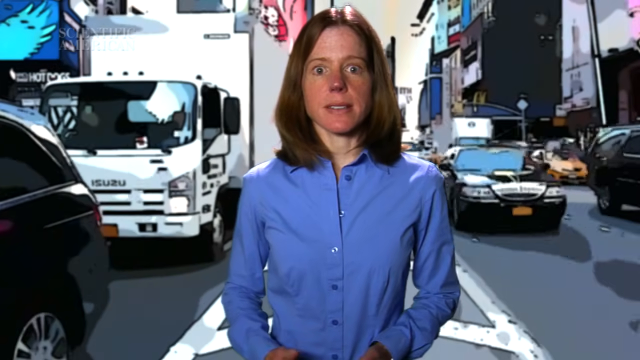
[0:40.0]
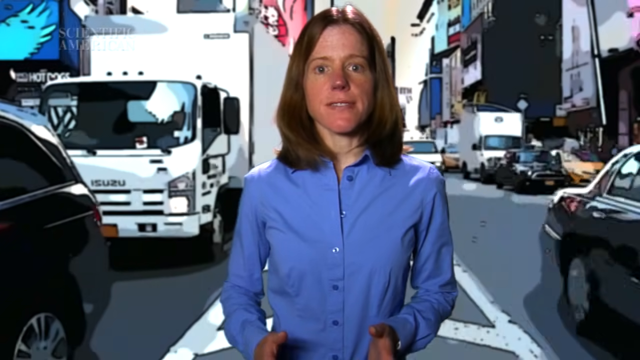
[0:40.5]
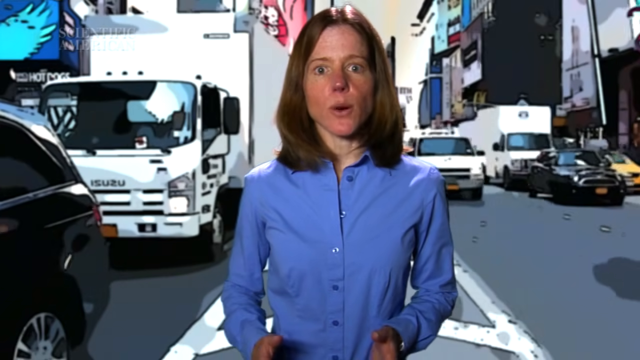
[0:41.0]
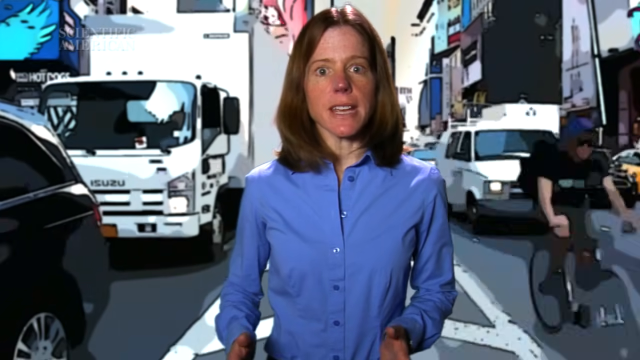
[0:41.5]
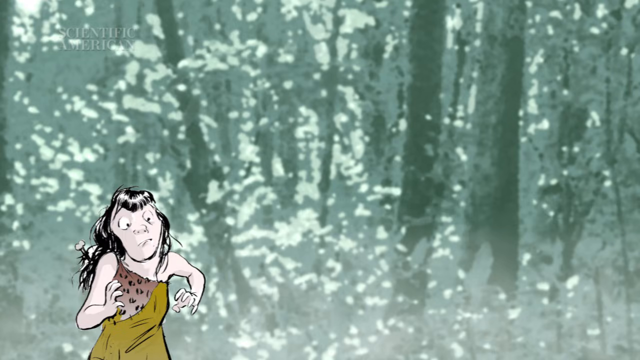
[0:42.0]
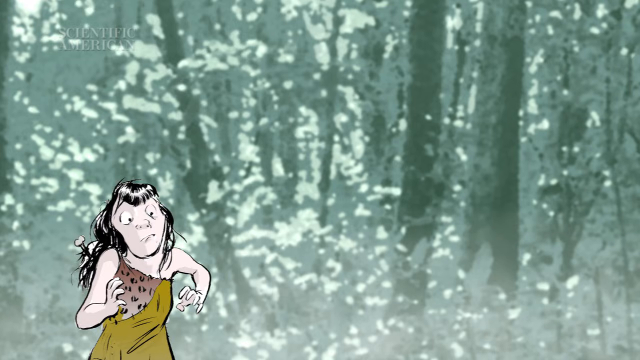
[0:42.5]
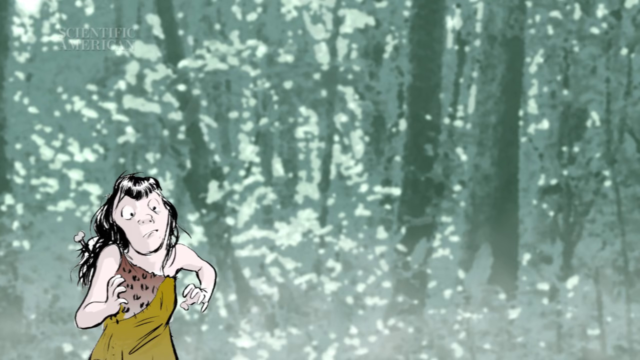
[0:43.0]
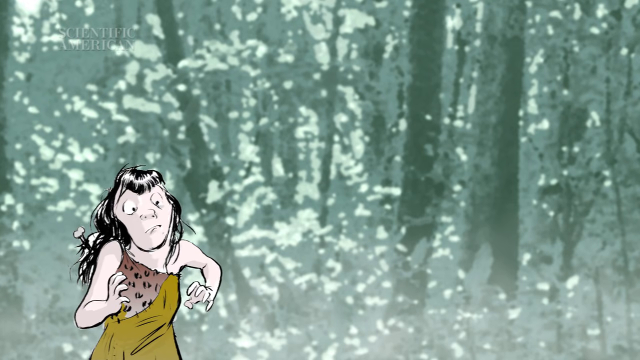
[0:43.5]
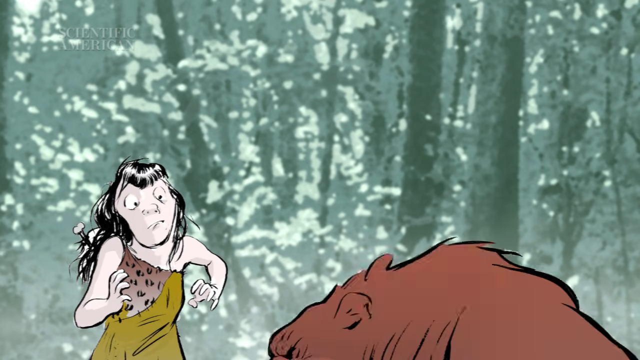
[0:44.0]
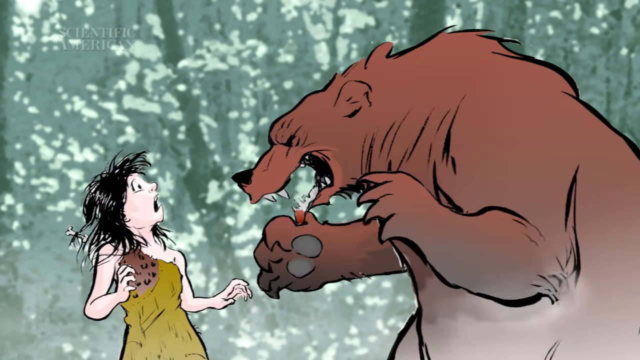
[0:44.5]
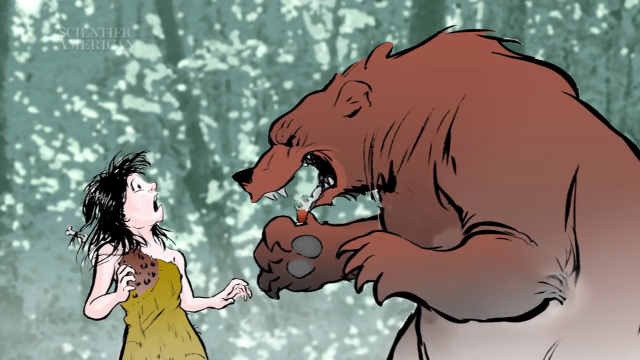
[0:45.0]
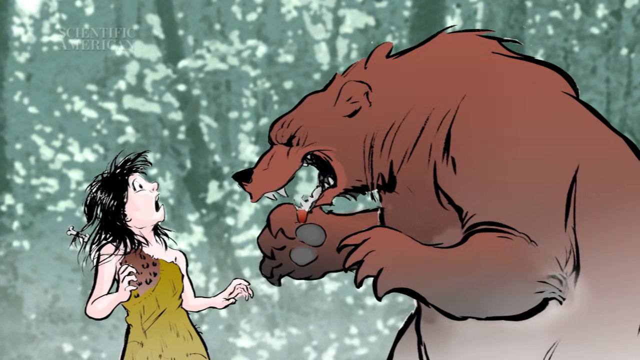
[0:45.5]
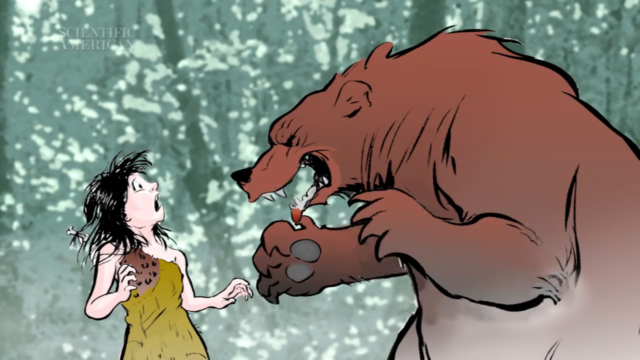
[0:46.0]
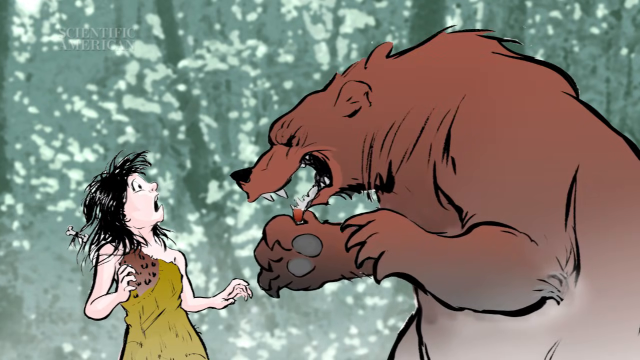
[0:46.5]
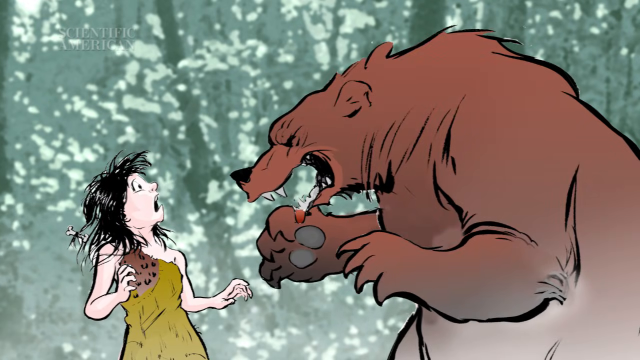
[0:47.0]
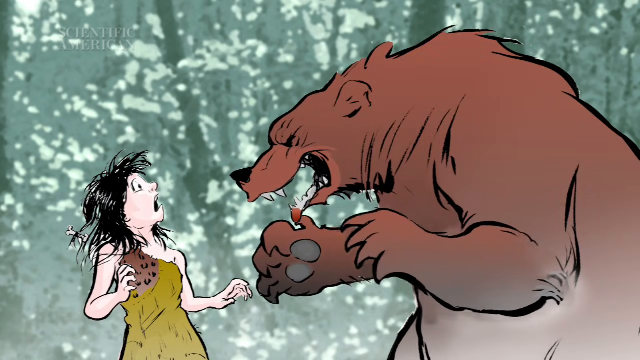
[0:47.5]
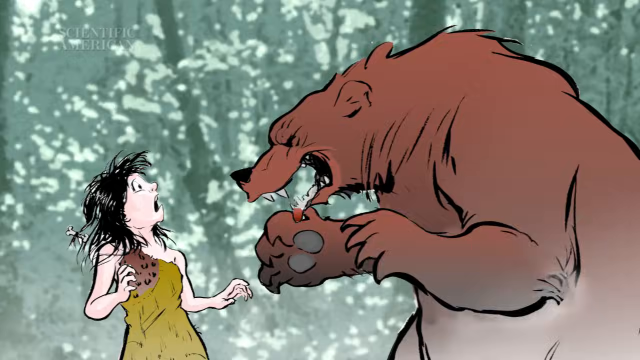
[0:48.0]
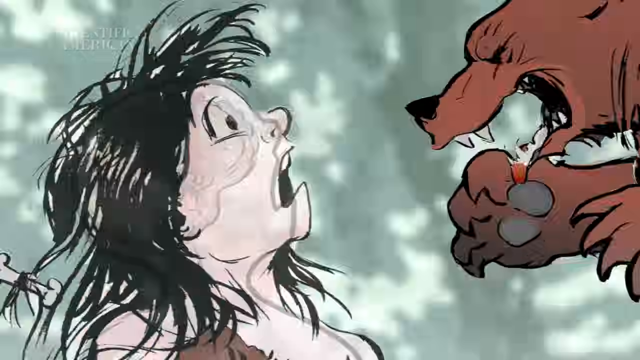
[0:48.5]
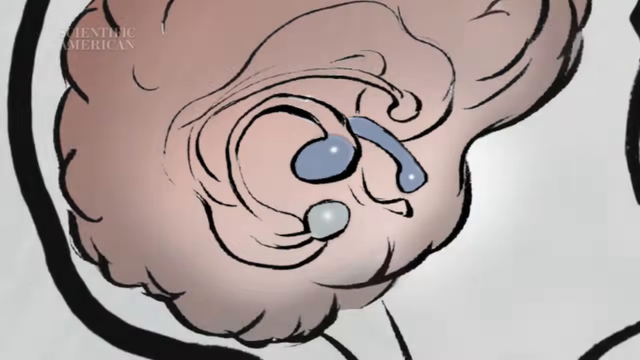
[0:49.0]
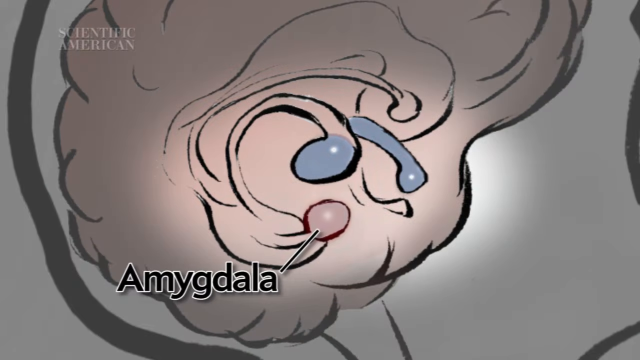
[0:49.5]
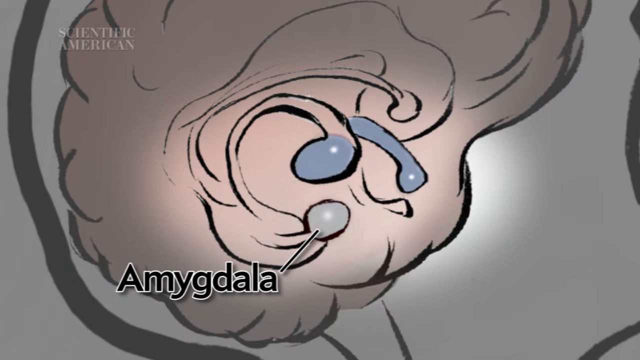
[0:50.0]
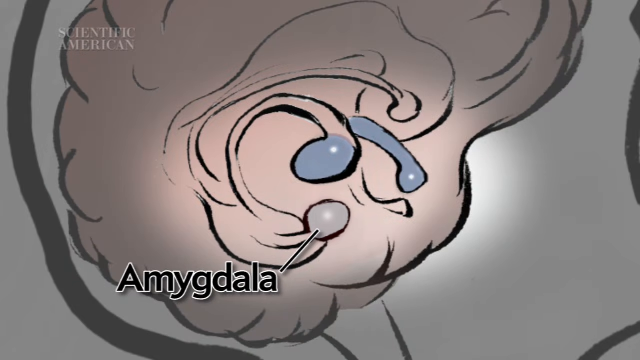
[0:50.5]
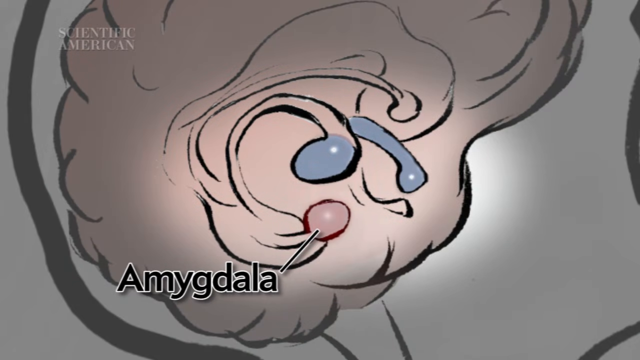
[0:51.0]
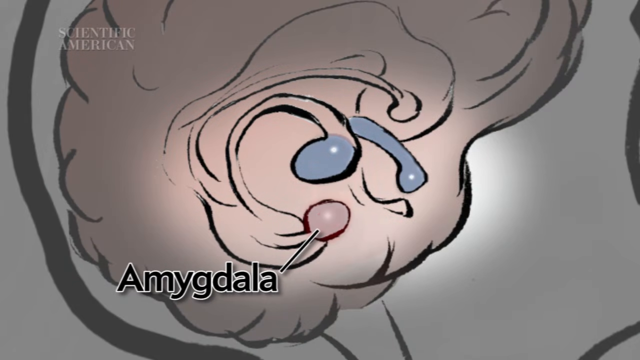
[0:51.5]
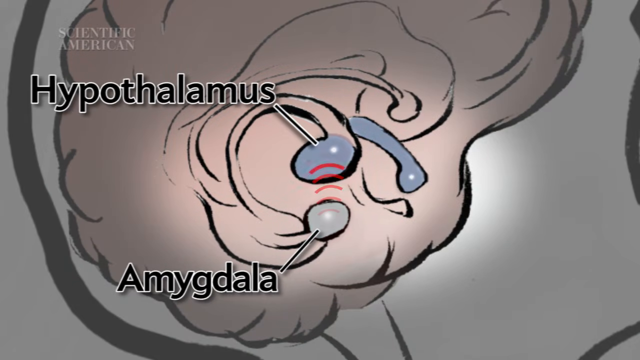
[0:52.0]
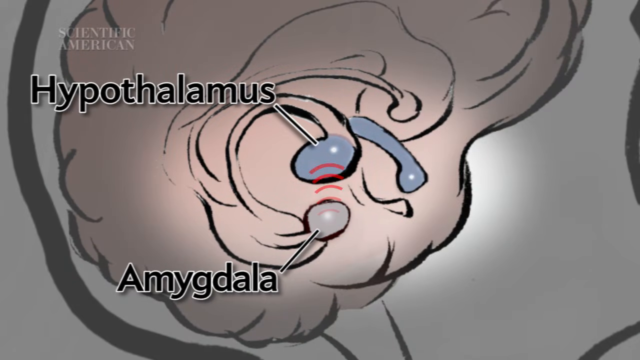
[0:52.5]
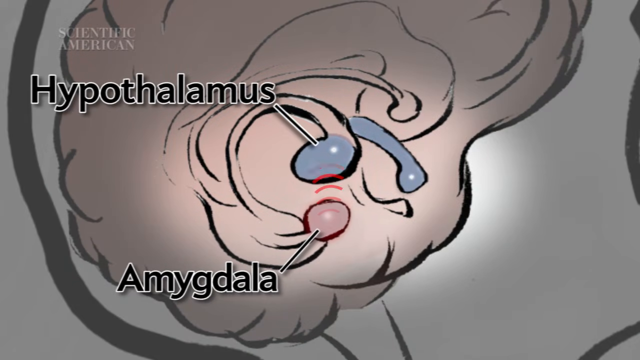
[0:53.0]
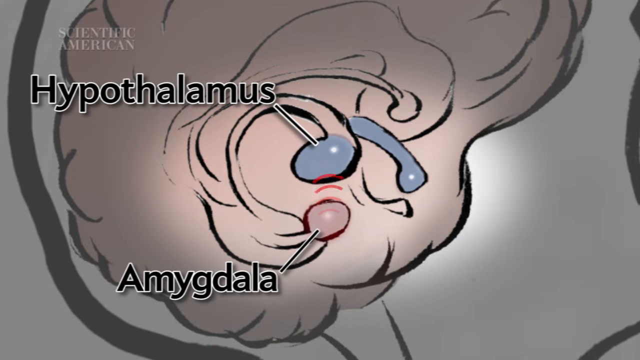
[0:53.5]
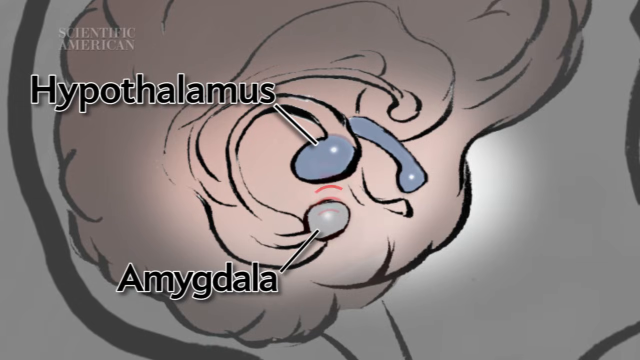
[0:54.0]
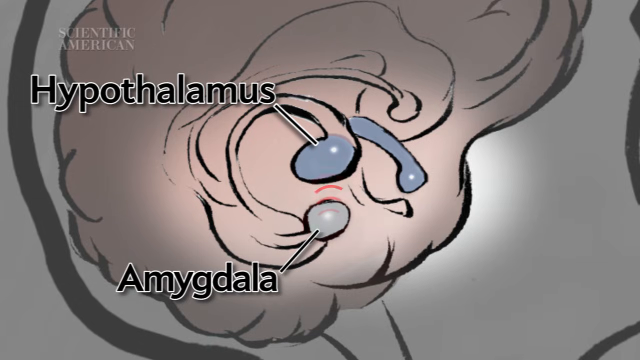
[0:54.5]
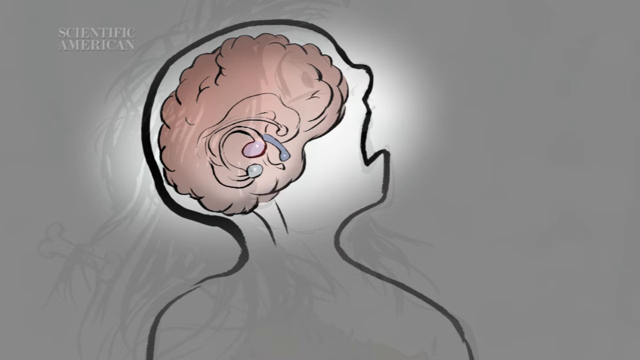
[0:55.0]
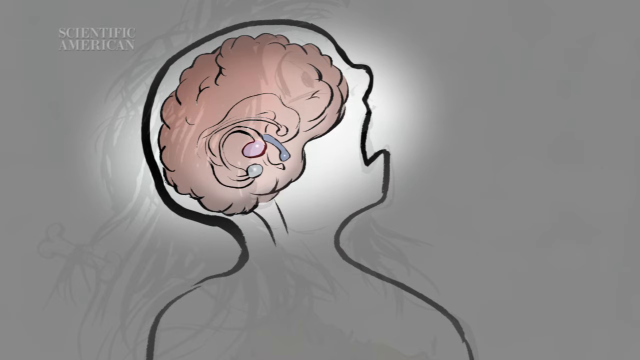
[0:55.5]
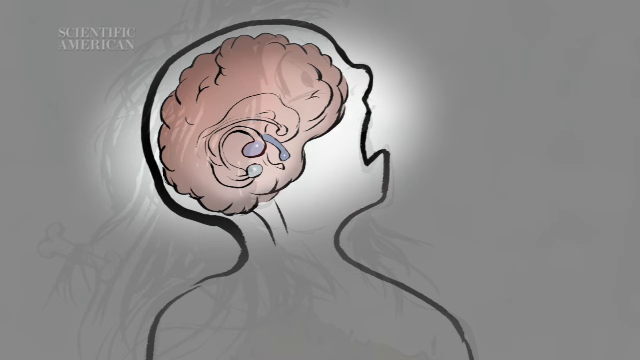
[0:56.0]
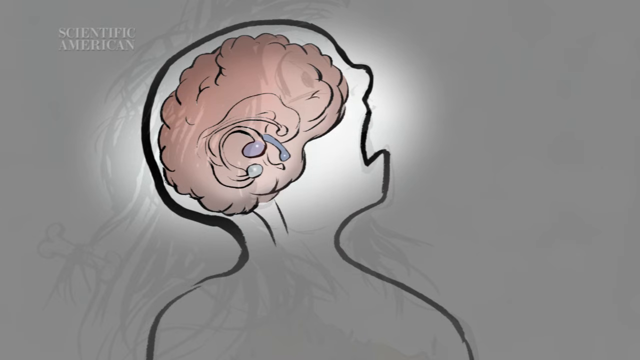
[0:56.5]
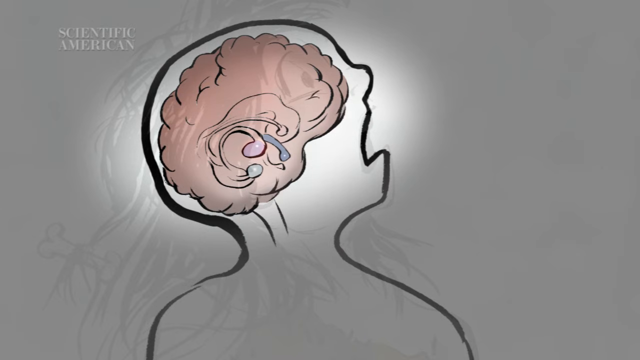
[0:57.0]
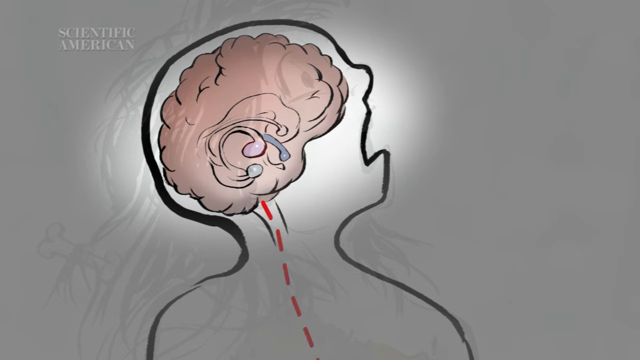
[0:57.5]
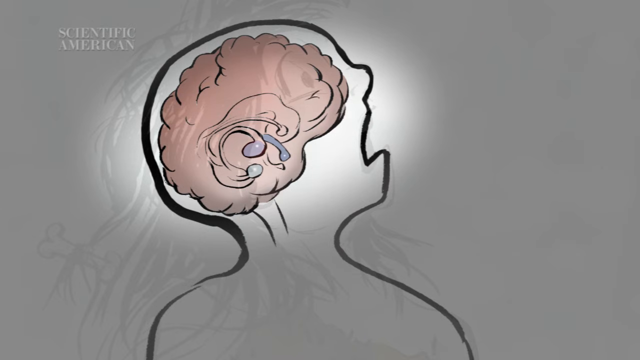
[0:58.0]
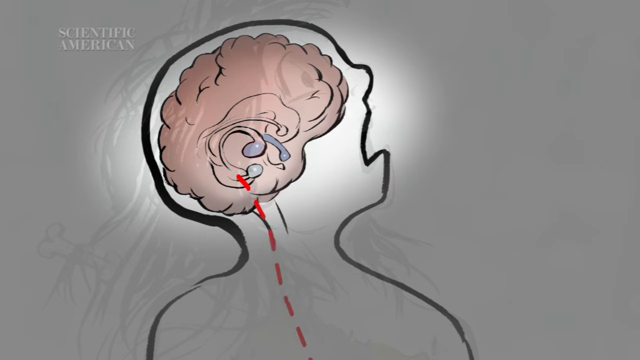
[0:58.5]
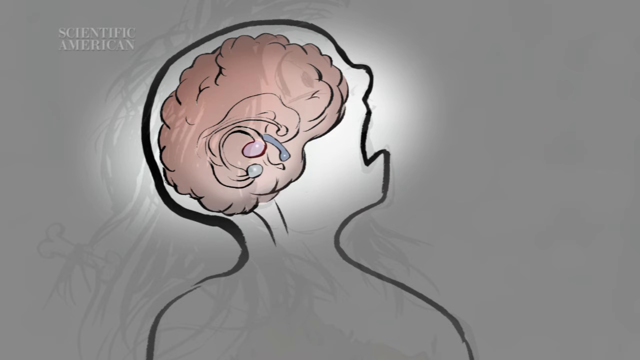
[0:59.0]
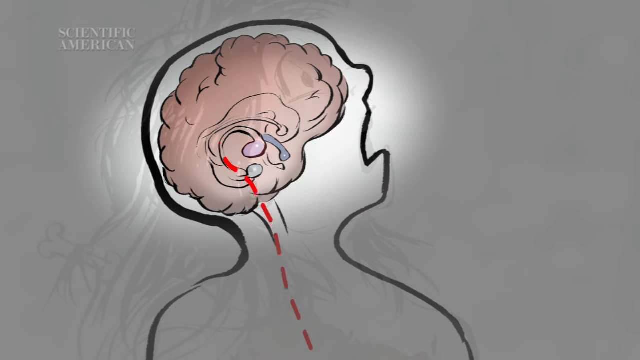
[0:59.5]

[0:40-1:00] The scene transitions from Times Square to what appears to be a prehistoric scene, drawn in animation. A woman dressed in animal skin like a cave woman, with black hair and a bone in her hair, is approached menacingly on her left side by a brown bear, which roars. The view pans closer and goes through her head and skull to her brain, where the word "amygdala" pops onto the screen and points to a section of the brain, which starts to sort of pulsate. Then the word "hypothalamus" pops up to show another section, which starts to beat. A dotted red line radiates down her neck to her stomach. It is all done in drawing, in a prehistoric environment like a forest that looks green.